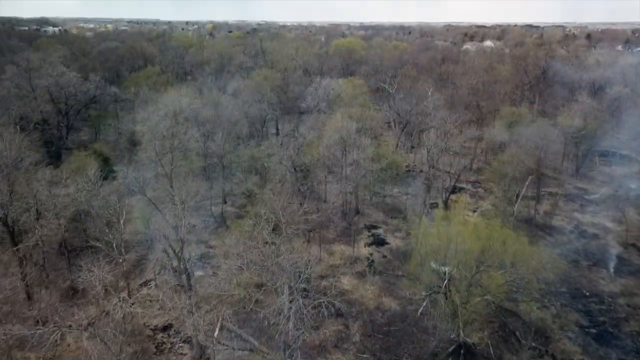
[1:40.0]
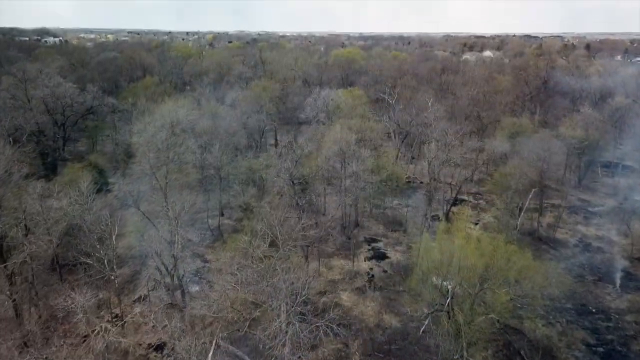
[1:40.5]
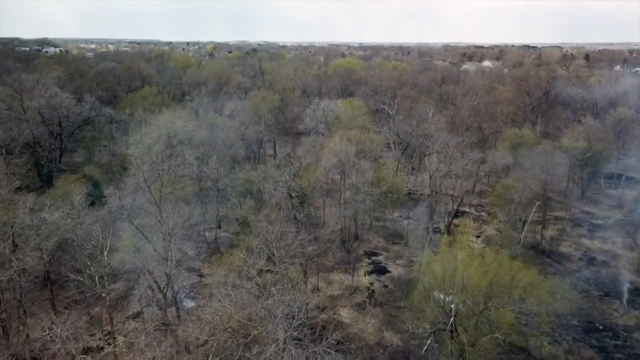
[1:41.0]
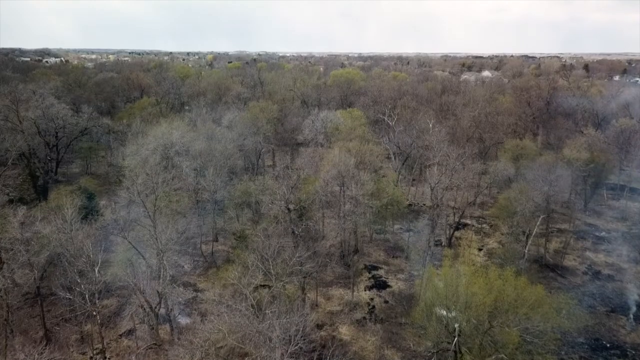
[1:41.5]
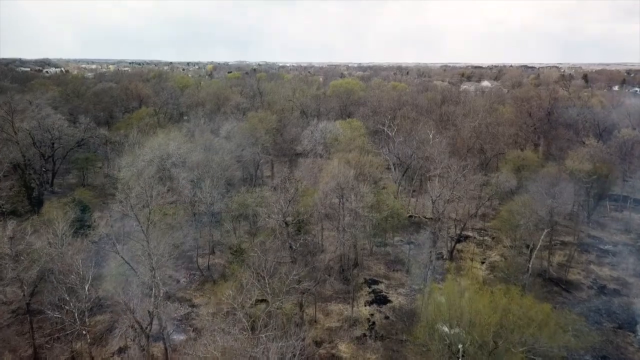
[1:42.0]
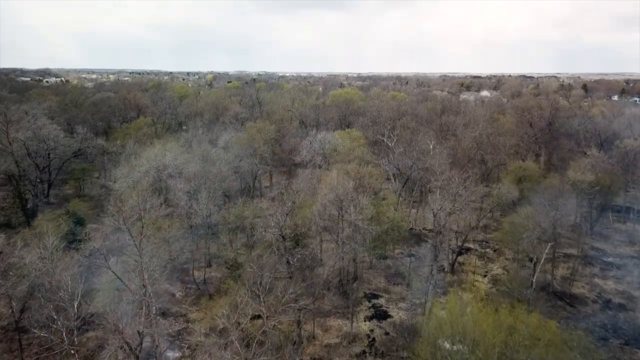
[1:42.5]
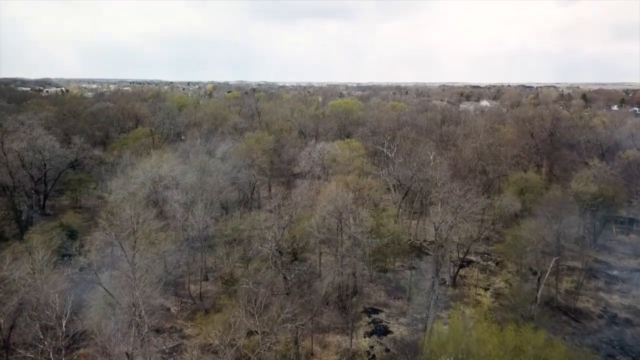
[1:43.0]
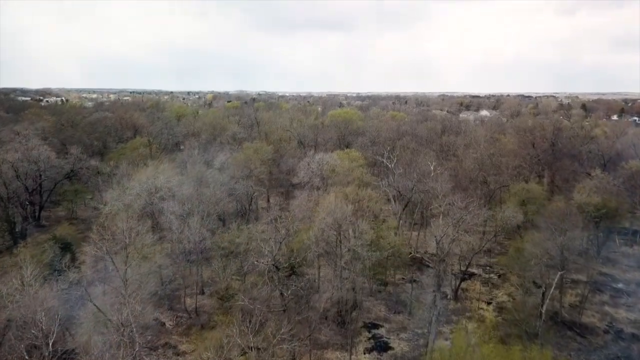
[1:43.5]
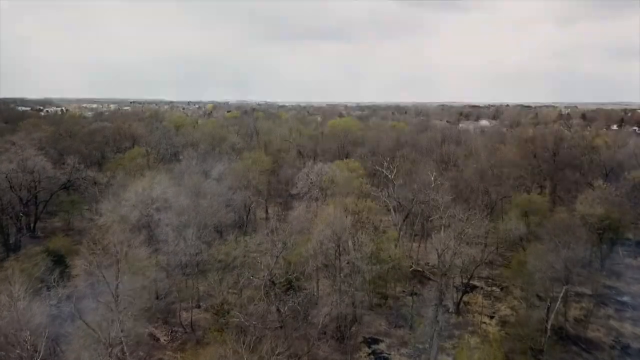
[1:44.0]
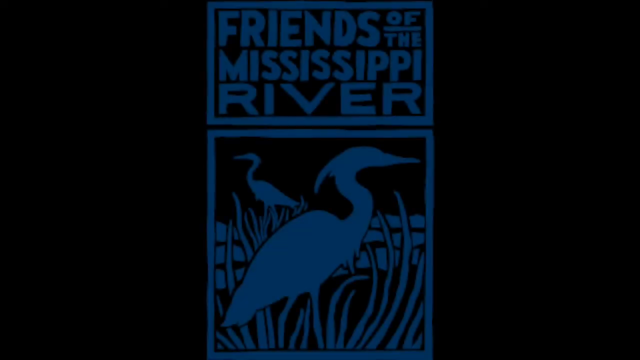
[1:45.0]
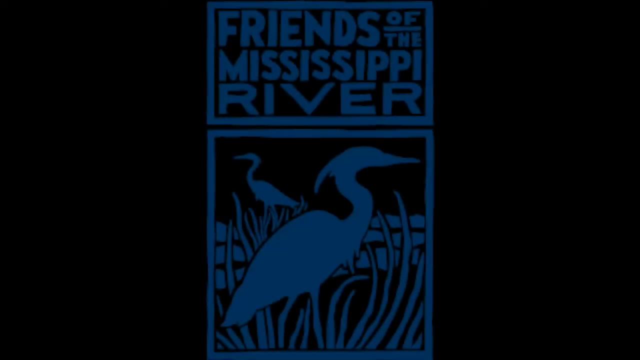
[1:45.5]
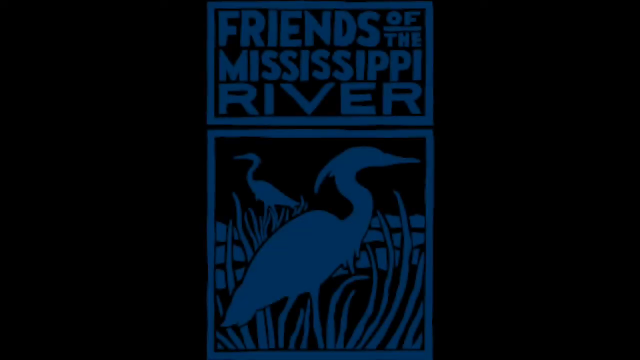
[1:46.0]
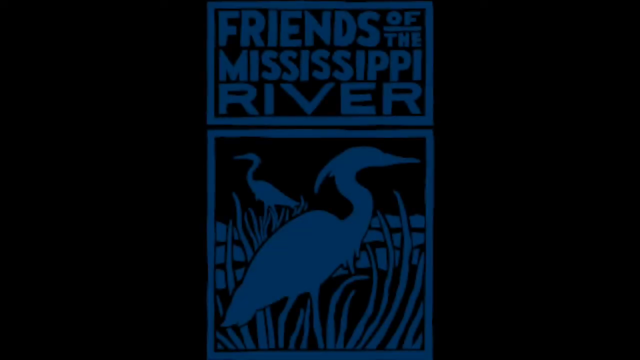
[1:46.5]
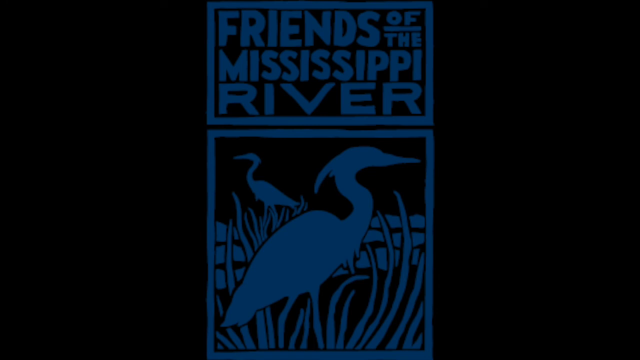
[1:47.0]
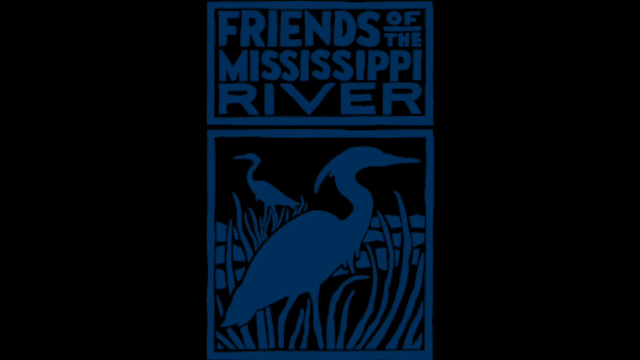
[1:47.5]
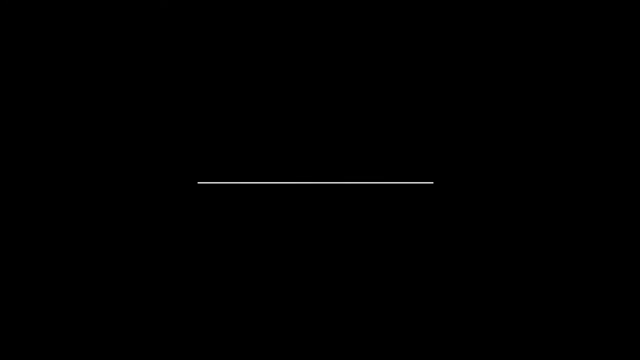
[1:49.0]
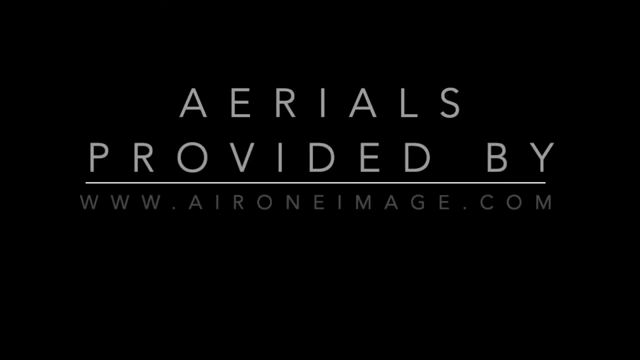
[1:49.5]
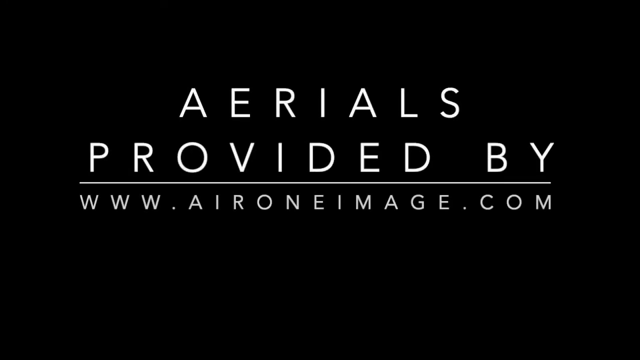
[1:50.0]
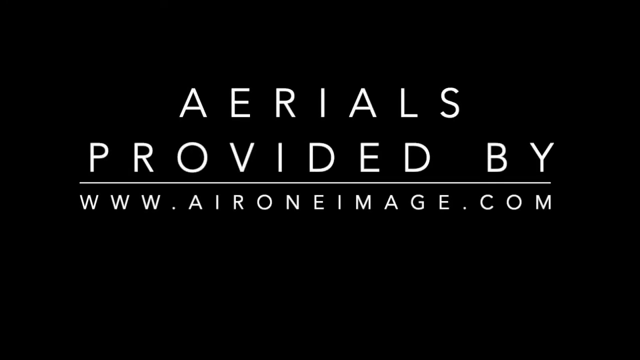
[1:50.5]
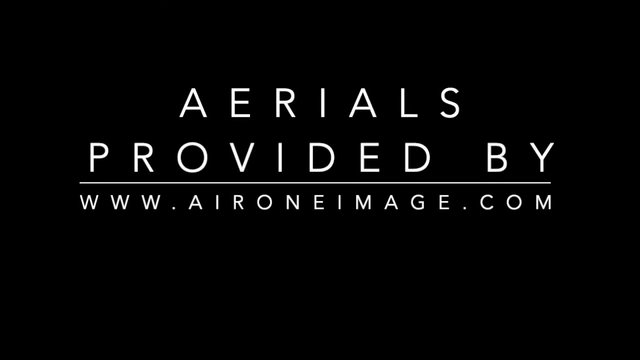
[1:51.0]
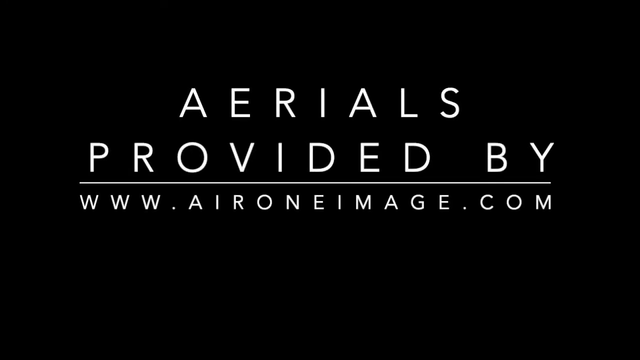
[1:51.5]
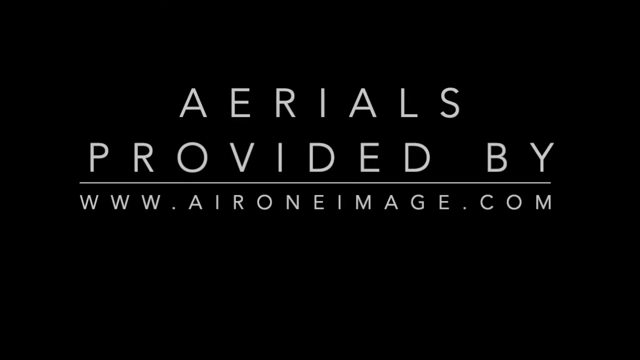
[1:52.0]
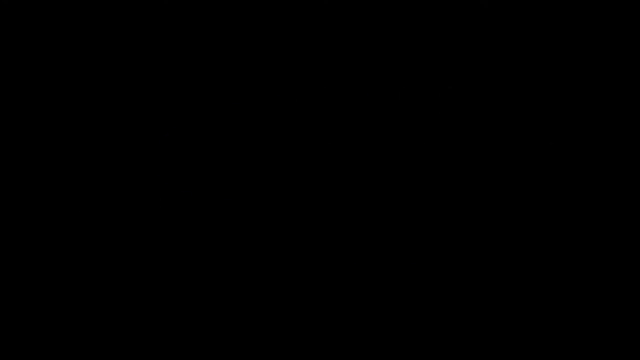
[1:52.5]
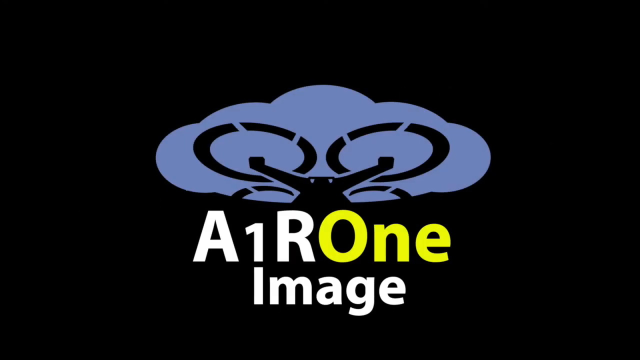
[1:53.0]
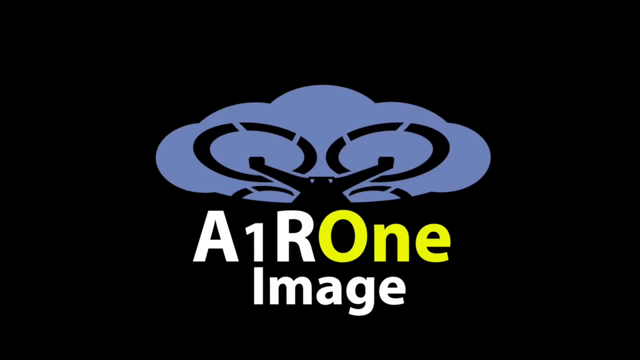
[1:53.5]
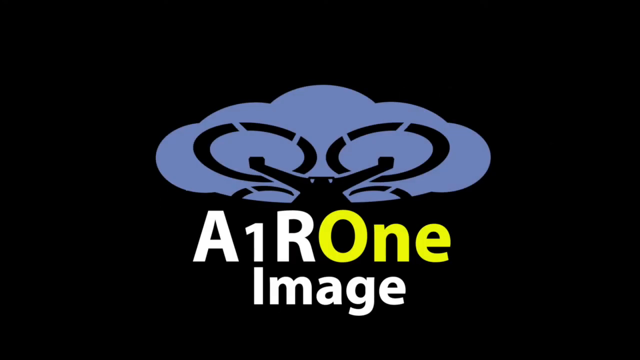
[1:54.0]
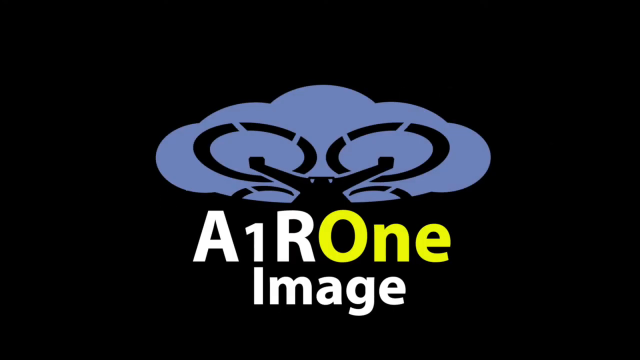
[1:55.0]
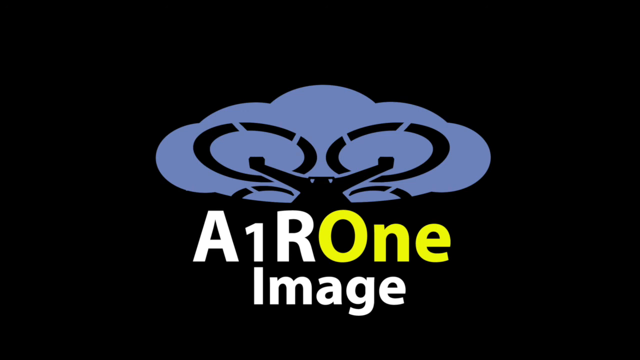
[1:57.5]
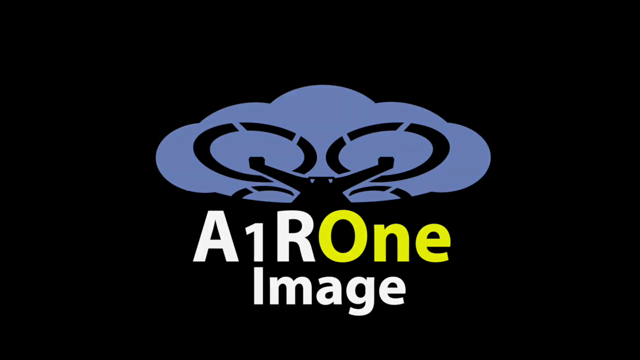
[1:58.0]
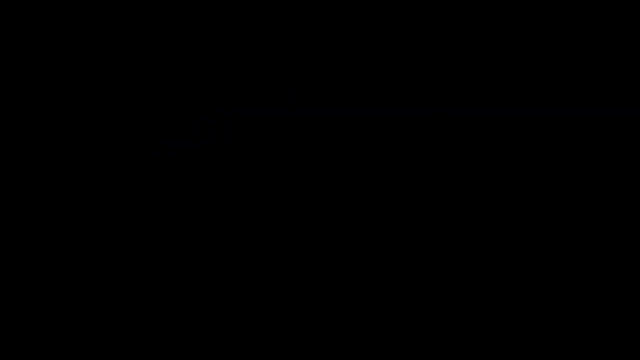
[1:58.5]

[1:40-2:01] An aerial view looks down into a forest. An emblem reads "Friends of the Mississippi River," and a credit shows the aerial footage was provided by "www.aeronowimage.com". Next an A1R1 Image logo appears, showing a bluish drawn cloud with a couple of circles, apparently a drone drawn into the cloud, which serves as the company's logo. Then the whole background turns black, with text about the Friends of the Mississippi River and the prescribed burn.